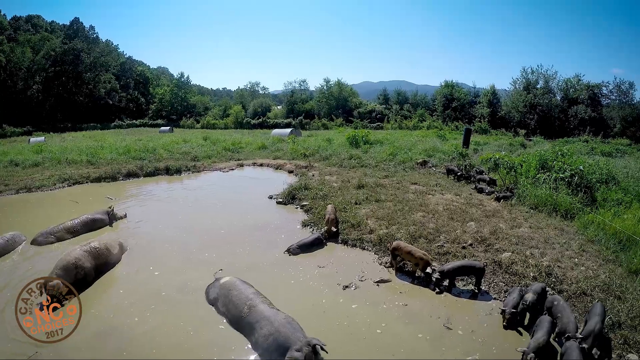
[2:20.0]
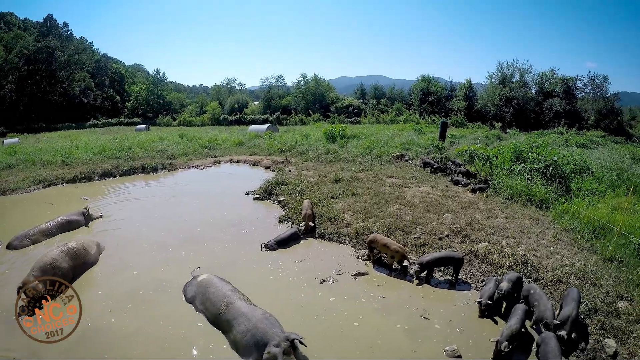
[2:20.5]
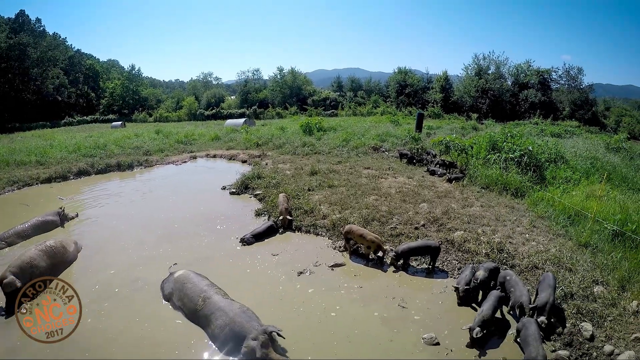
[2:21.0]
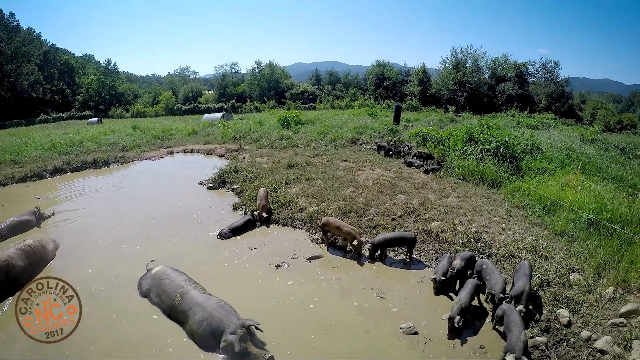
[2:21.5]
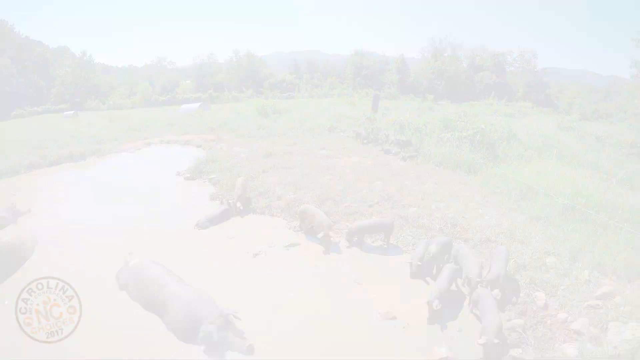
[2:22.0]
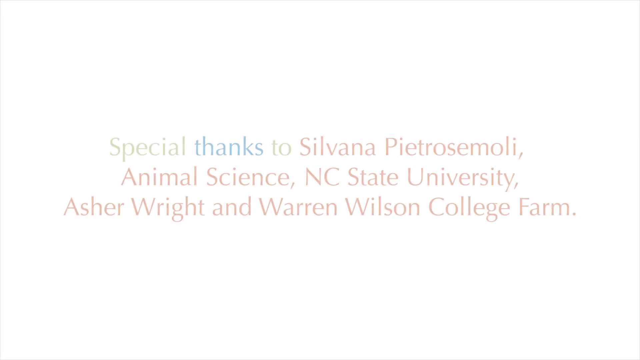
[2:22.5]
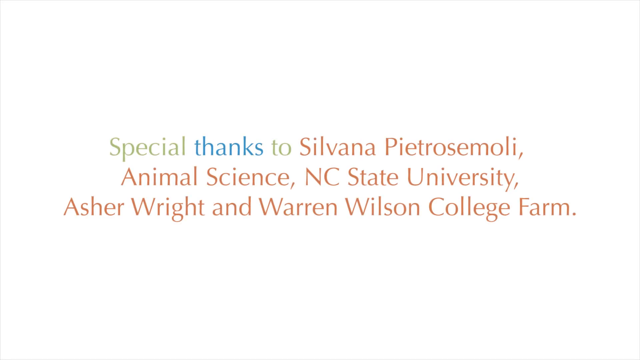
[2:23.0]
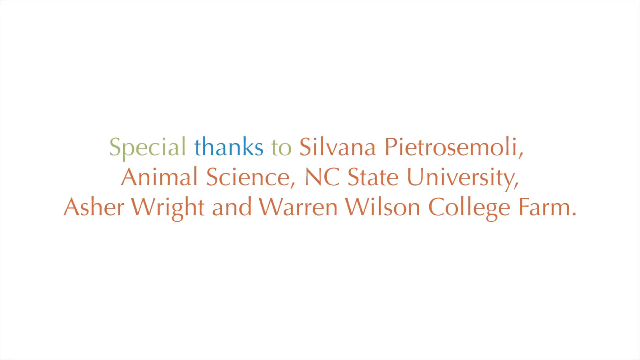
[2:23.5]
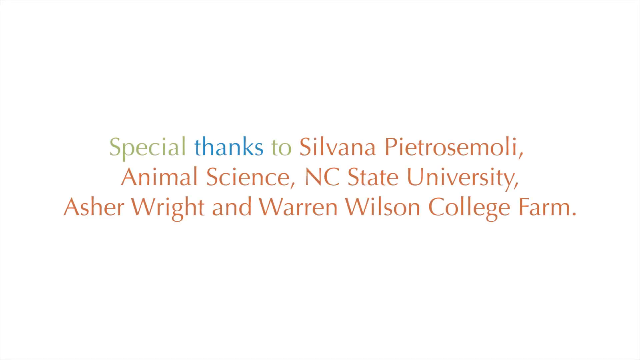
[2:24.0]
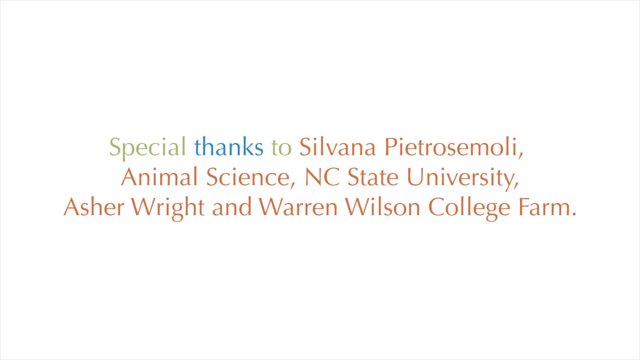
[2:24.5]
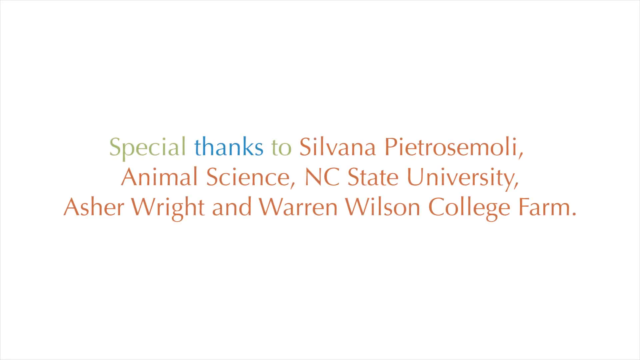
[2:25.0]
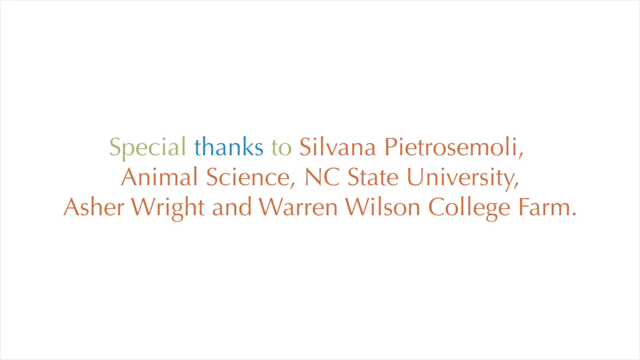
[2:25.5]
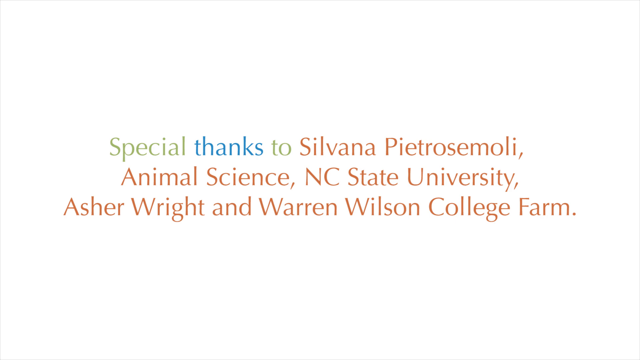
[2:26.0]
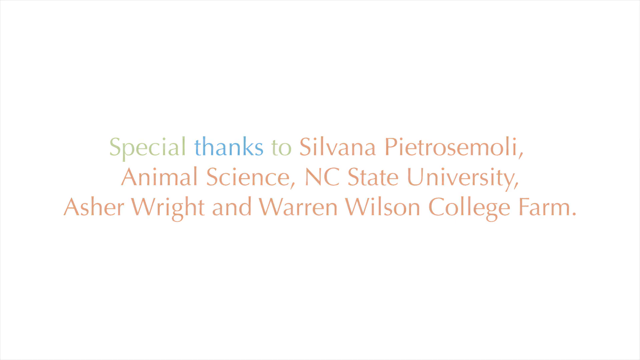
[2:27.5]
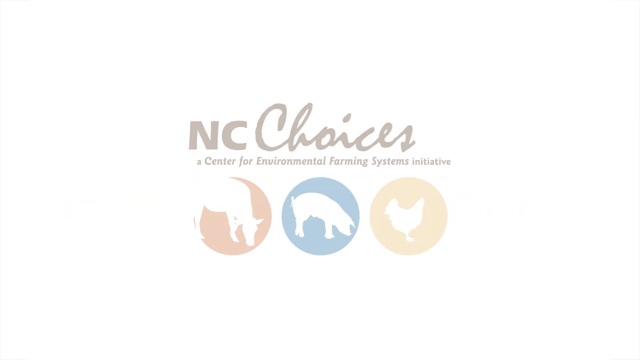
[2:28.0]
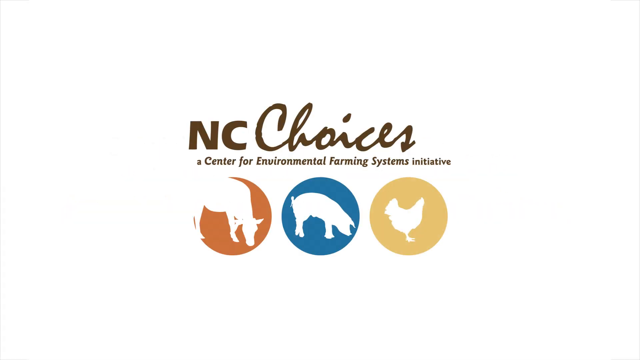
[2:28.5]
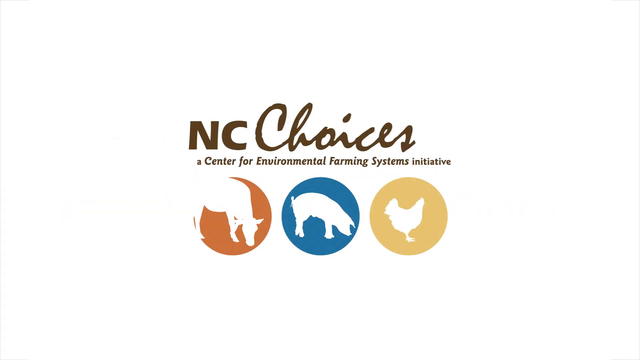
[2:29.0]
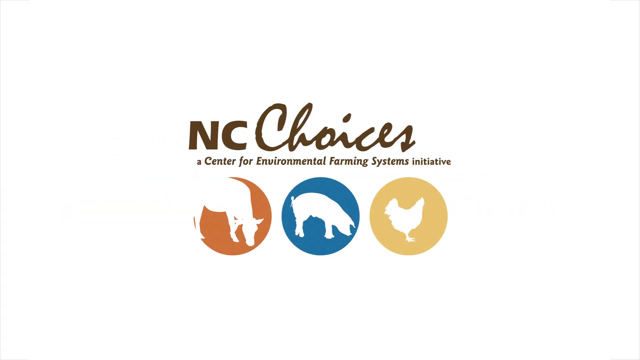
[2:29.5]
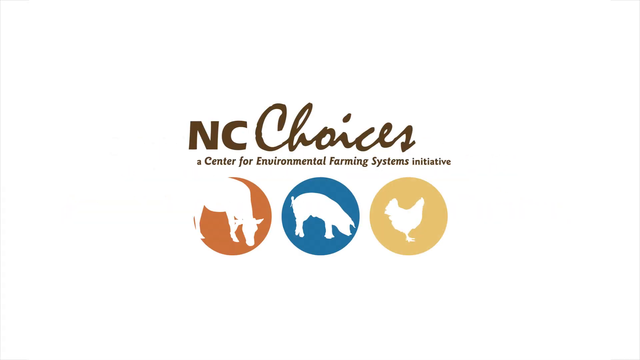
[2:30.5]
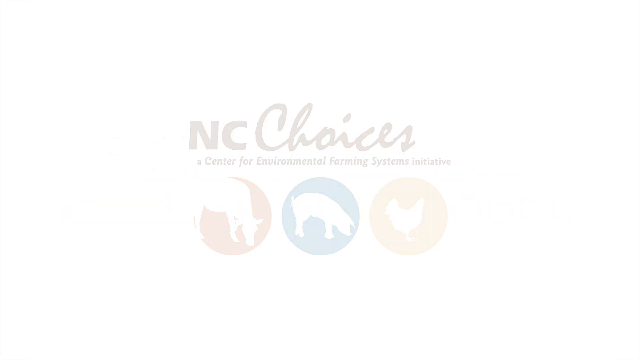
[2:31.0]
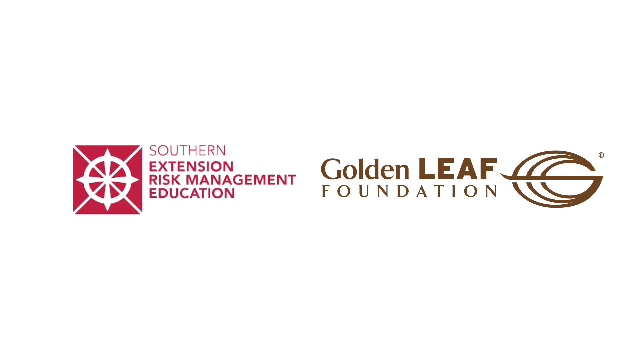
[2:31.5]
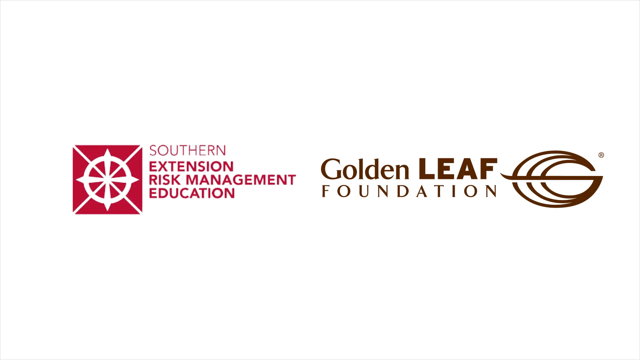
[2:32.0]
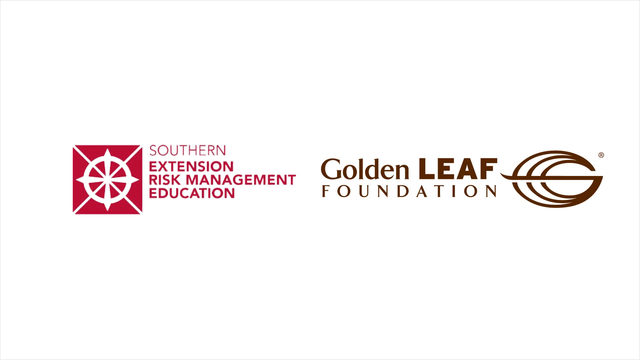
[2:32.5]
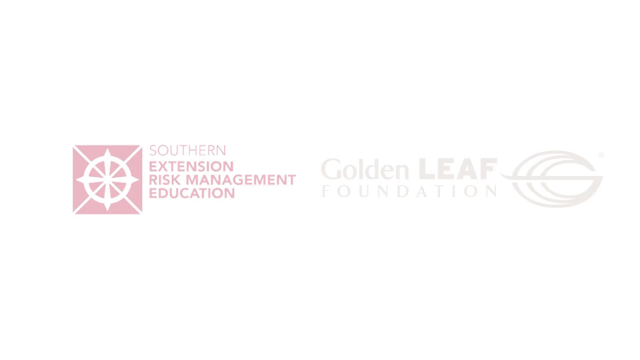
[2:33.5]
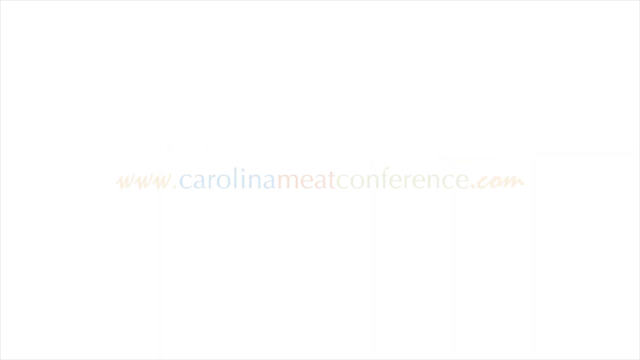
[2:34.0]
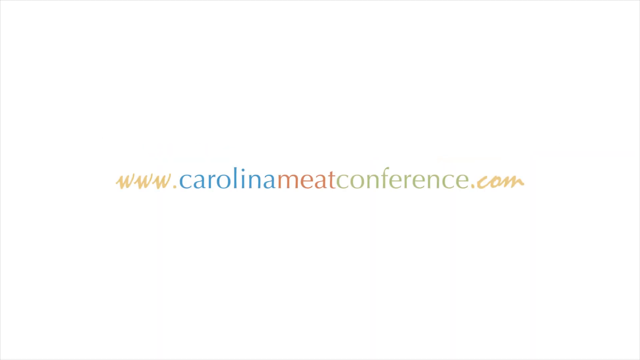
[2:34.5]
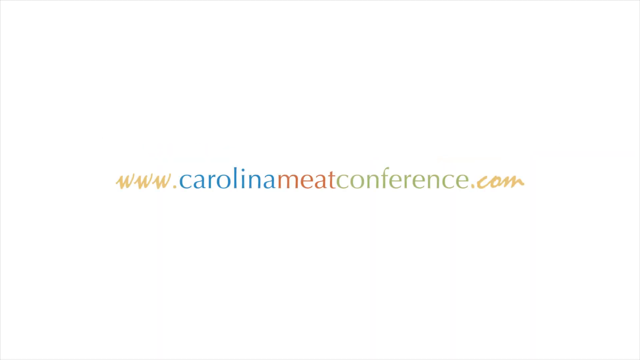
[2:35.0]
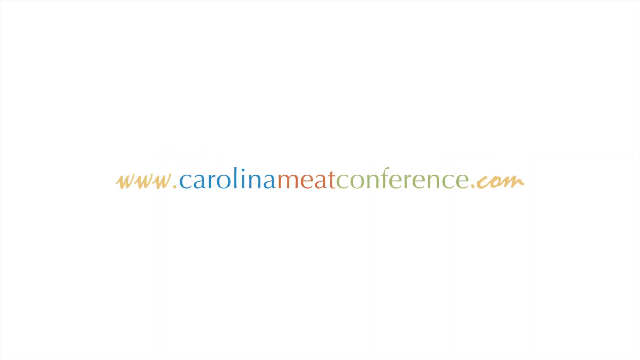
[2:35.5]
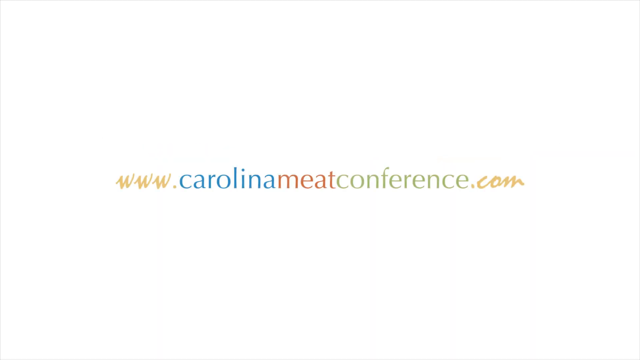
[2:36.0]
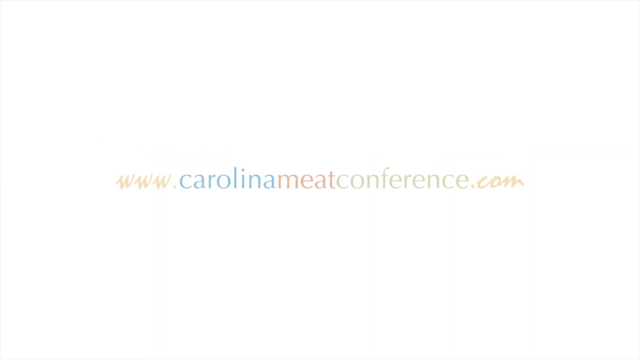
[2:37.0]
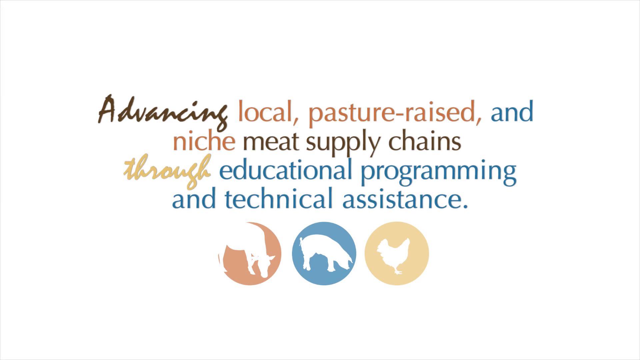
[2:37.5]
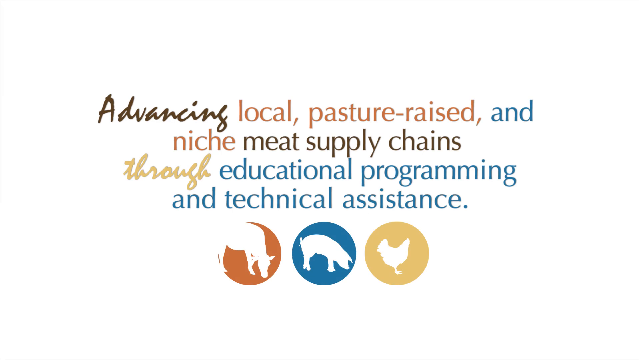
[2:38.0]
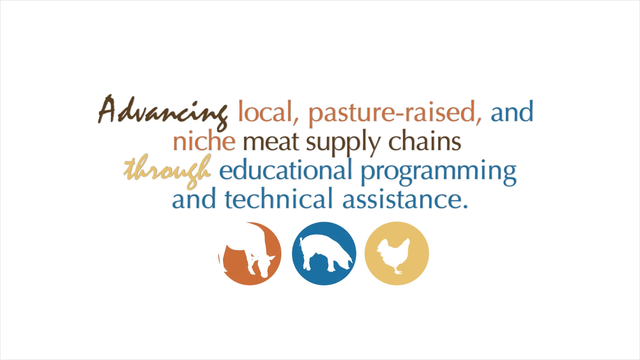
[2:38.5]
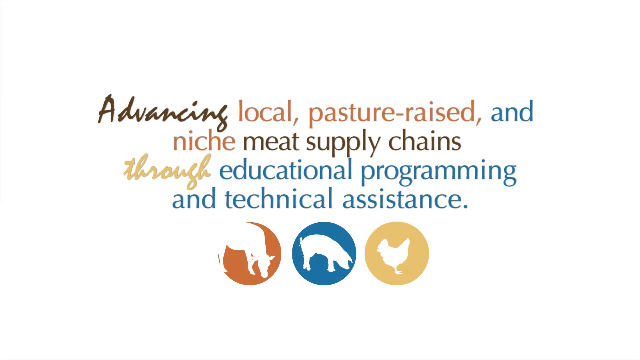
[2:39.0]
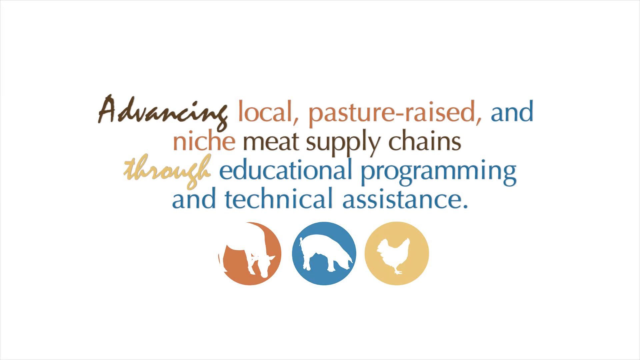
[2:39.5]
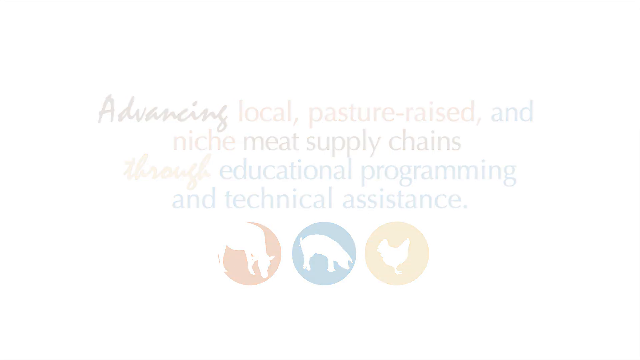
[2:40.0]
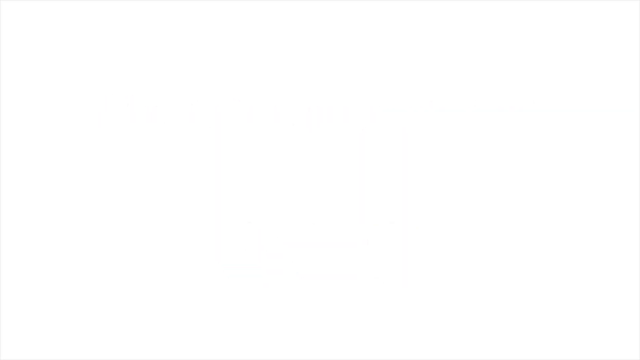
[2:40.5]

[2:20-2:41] A very muddy hole appears, with at least four mature pigs just lying in the watering hole. A bunch of small piglets, maybe about six to eight, are on the edge of the watering hole. In the distance there is a lot of pasture with unmowed grass, some trees along the tree line, and a mountain beyond that. The camera pans around and shows even more piglets, all black, a dark color. It then transitions to a white screen with the words "special thanks to Sylvania, Petro Simoli, Animal Science, NY State University, Asher Wright, and Warren Wilson College Farm." The word "special" is in a spring green, "thanks" is in a bright blue, "to" is in the same green, and the rest of the words are in a soft orange. Then the same logo from the start comes back up: "NC Choices, Center for Environmental Farming and Systems Initiative," with the cow, pig and chicken silhouettes and an orange circle, a blue circle and a yellow circle.